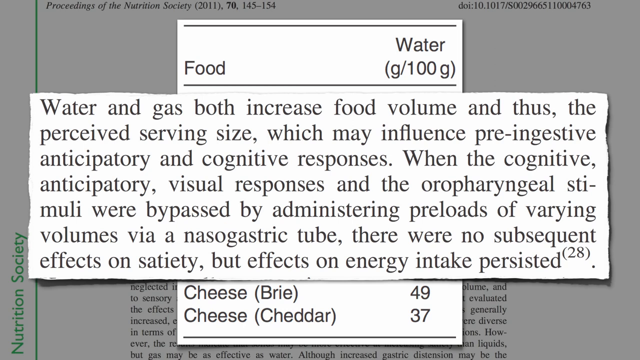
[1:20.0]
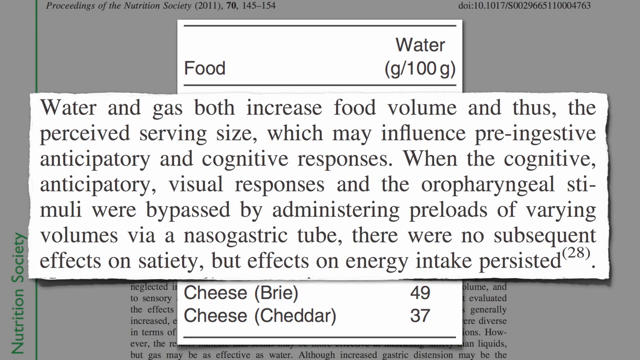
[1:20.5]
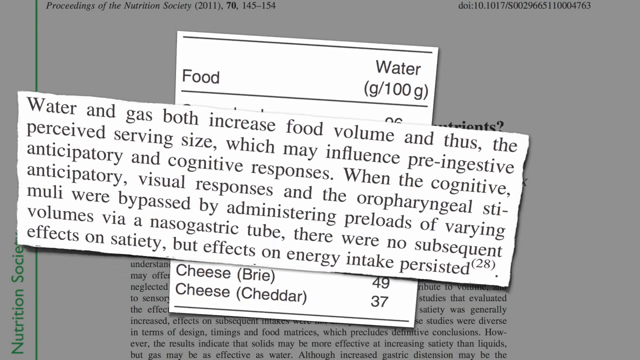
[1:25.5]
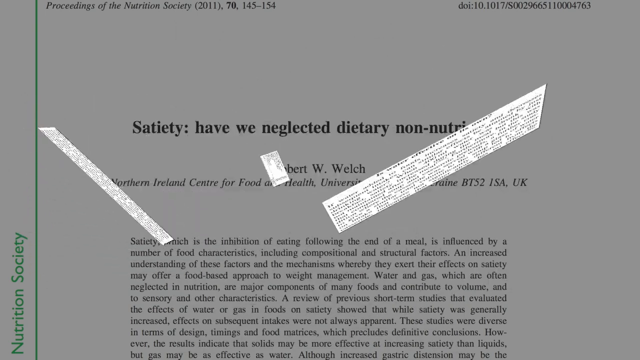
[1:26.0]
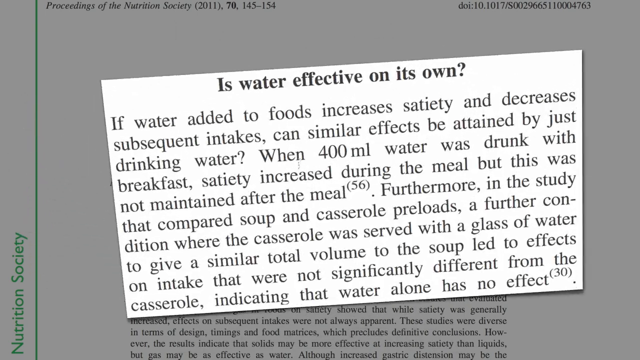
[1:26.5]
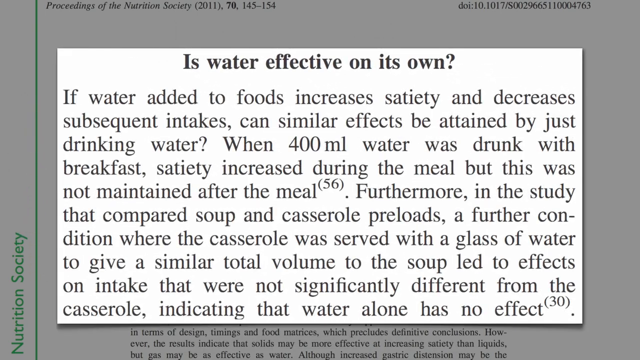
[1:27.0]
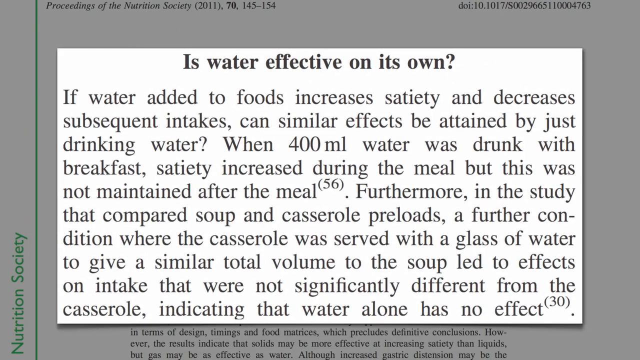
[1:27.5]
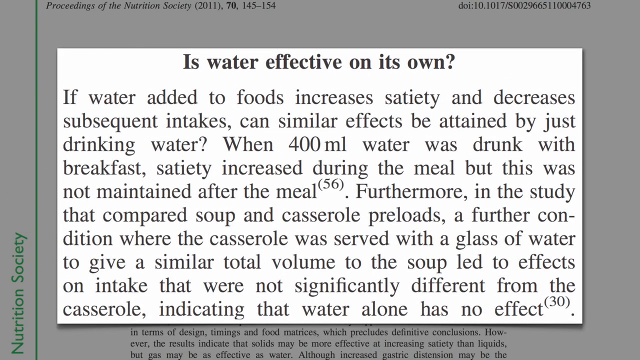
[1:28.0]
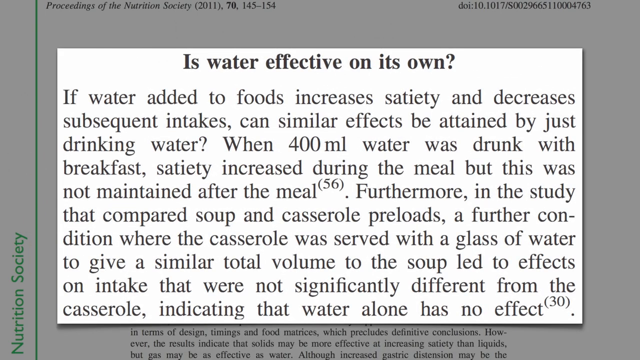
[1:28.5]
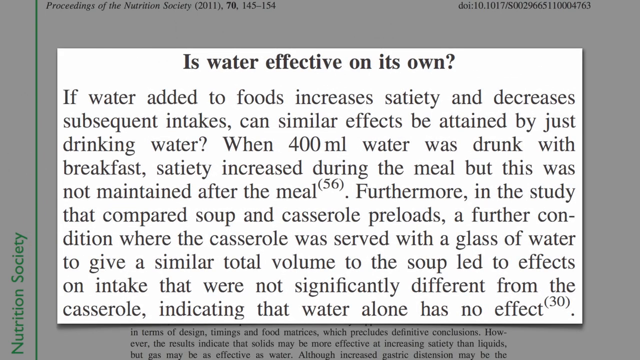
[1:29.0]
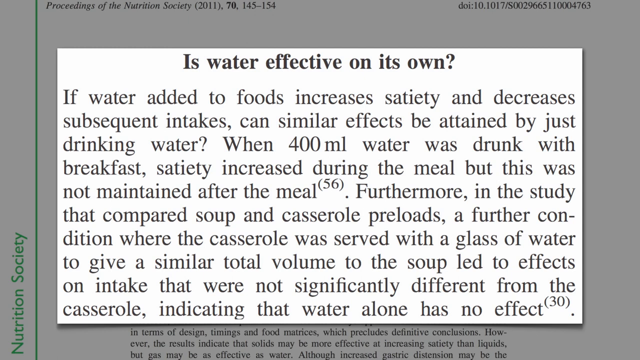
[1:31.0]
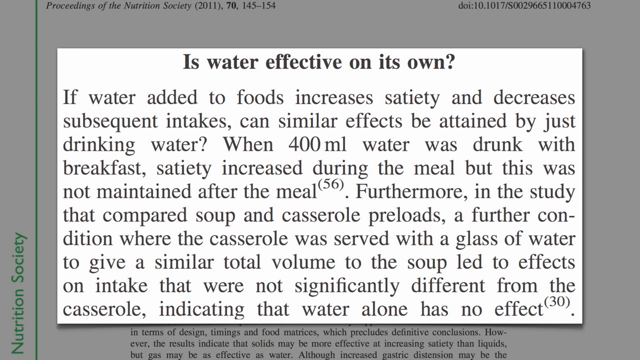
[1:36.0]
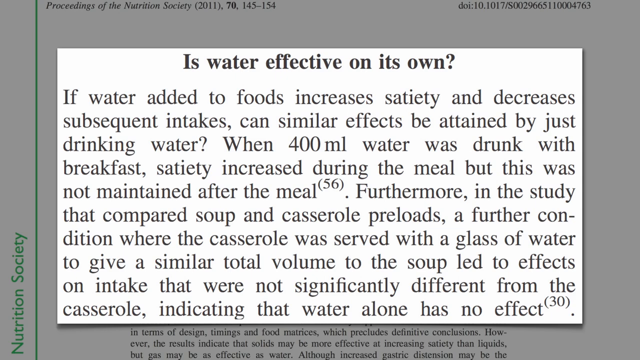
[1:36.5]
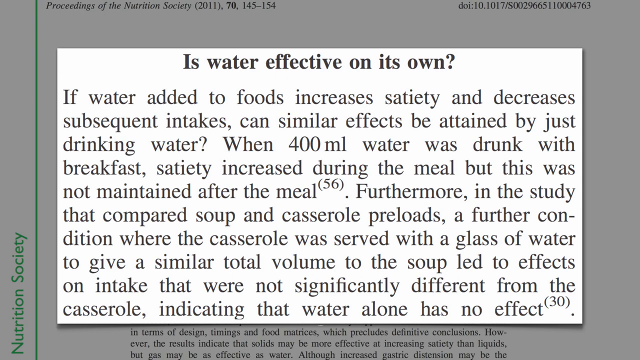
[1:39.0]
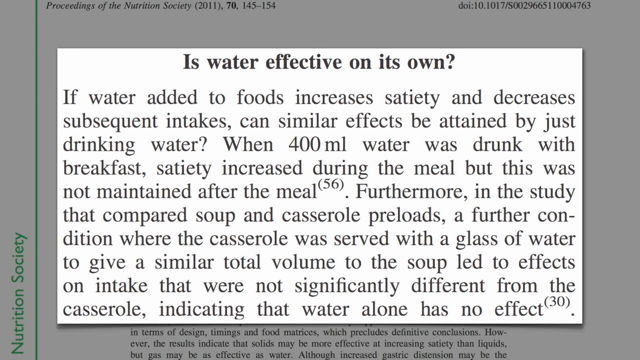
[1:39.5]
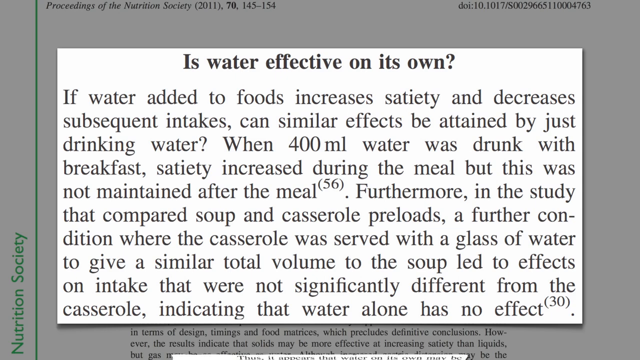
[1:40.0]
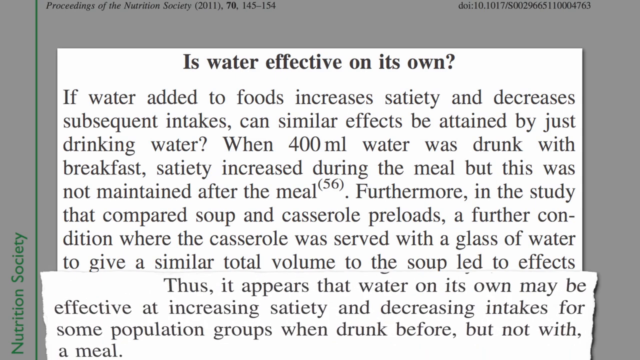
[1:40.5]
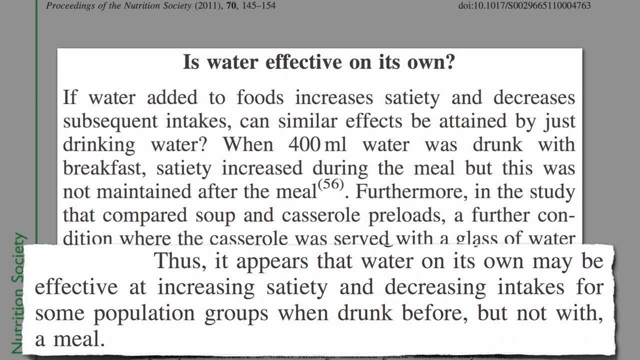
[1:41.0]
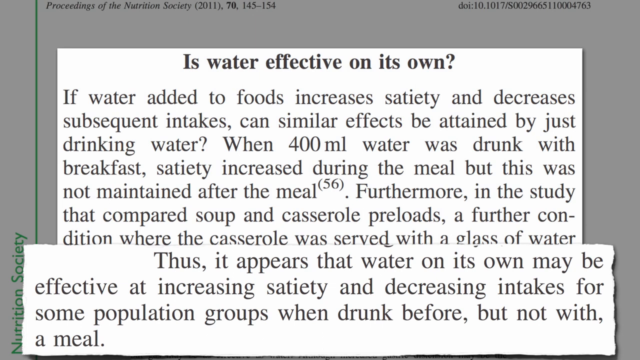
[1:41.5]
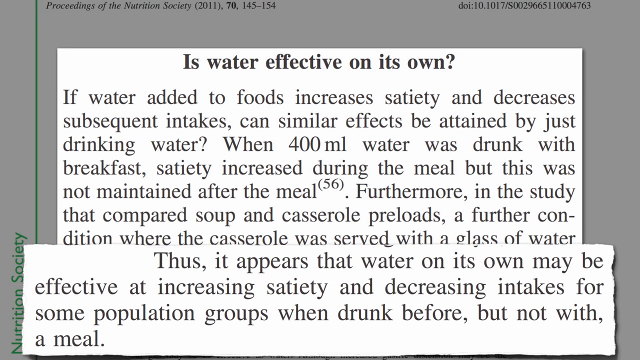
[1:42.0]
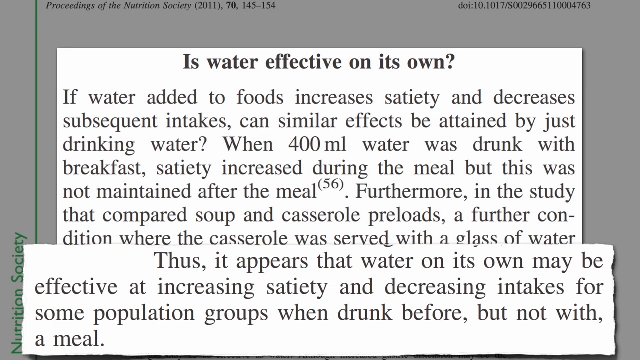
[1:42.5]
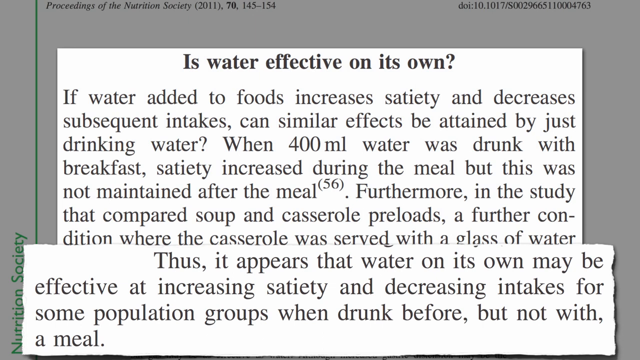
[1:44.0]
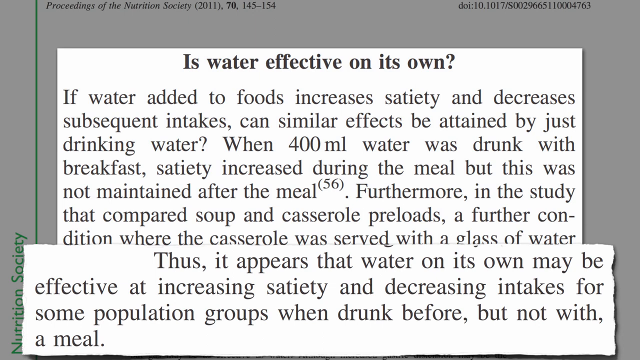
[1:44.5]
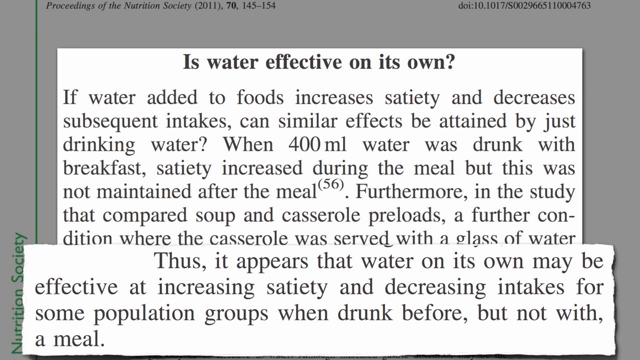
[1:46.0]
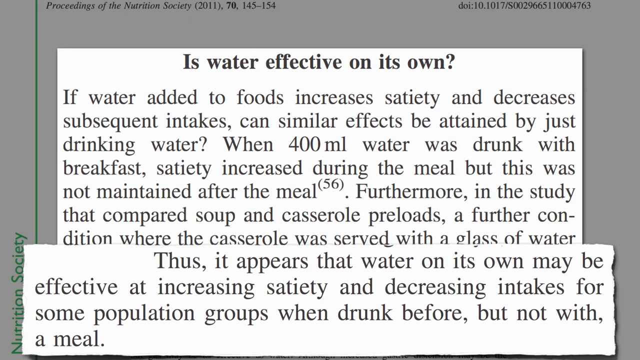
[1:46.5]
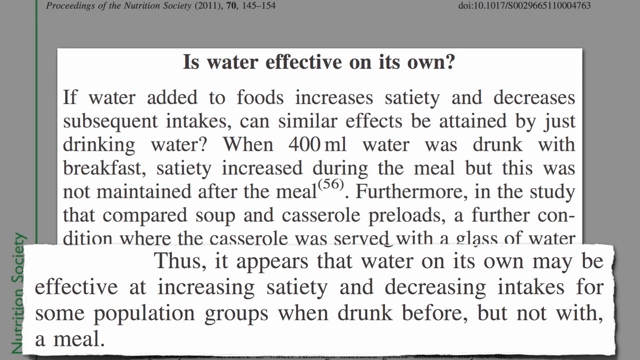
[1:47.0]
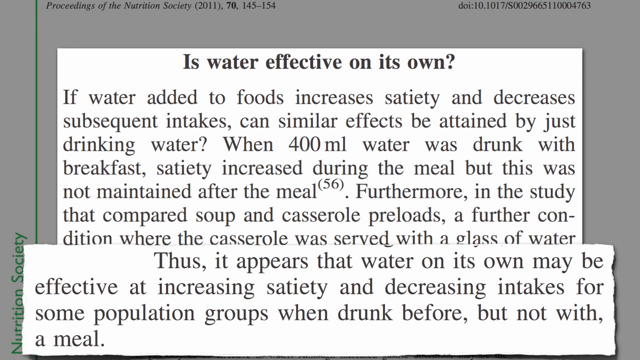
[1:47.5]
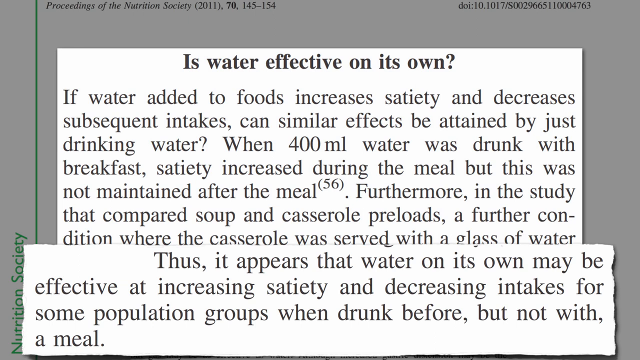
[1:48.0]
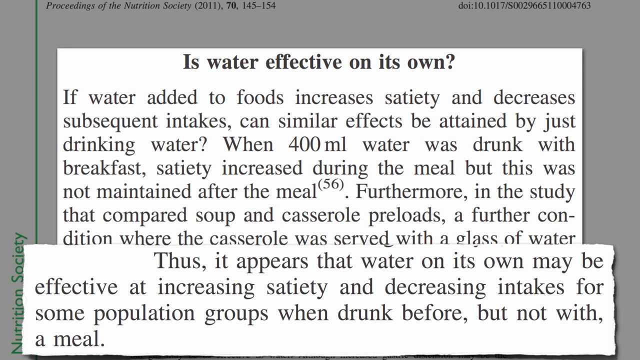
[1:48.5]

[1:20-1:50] The text reads "water and gas both increase food volume and thus the perceived serving size, which may influence pre-ingestive, anticipatory, and cognitive responses. When the cognitive anticipatory visual responses and the oropharyngeal stimuli were bypassed by administering preloads of varying volumes via a nasal gastric tube, there were no subsequent effects on satiety, but effects on energy intake persisted." New black text on a white background then appears: "is water effective on its own," continuing "if water added to foods increases satiety and decreases subsequent intakes, can similar effects be attained by just drinking water? when 400 milliliter of water was drunk with breakfast, the satiety increased during the meal, but this was not maintained after the meal. Furthermore, in the study that compared soup and casserole preloads, a further condition where the casserole is served with a glass of water to give a similar total volume to the soup led to effects on intake that were not significantly different from the casserole, indicating that the water alone has no effect."